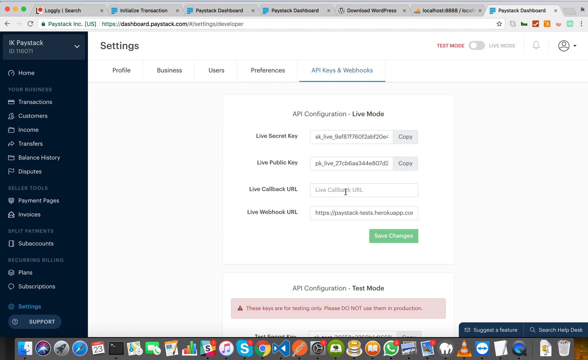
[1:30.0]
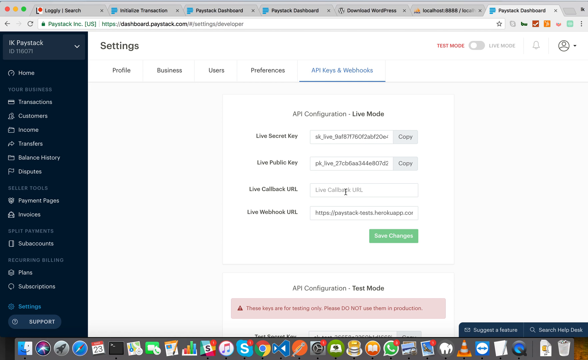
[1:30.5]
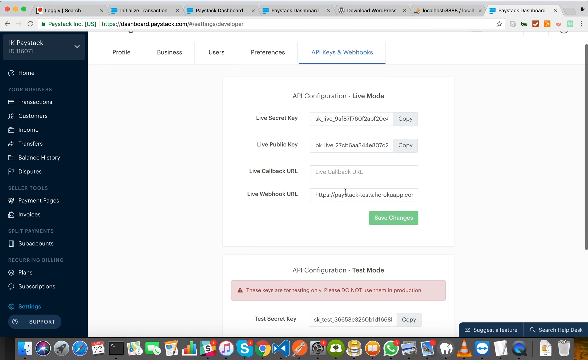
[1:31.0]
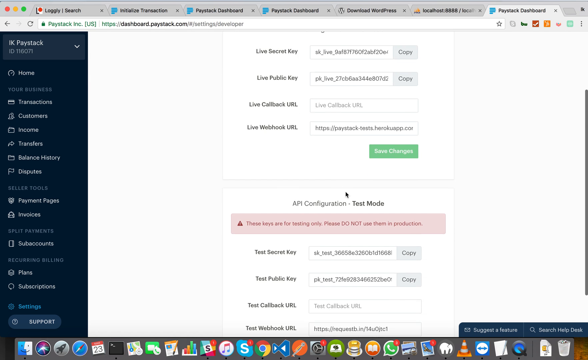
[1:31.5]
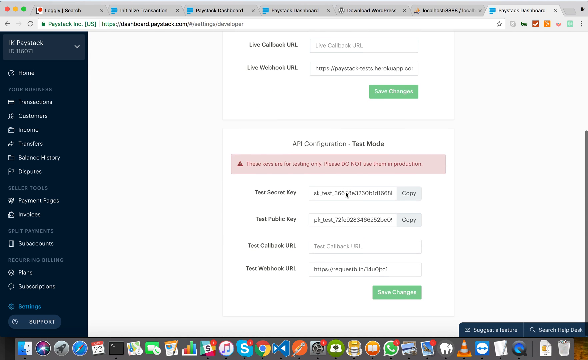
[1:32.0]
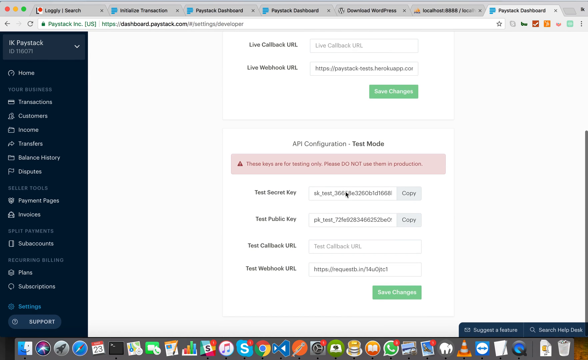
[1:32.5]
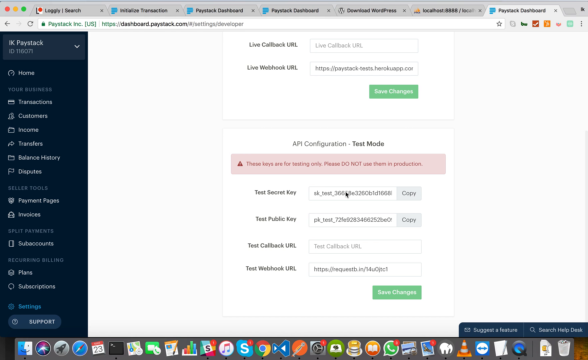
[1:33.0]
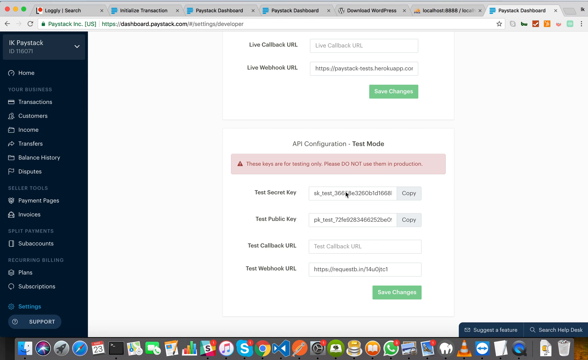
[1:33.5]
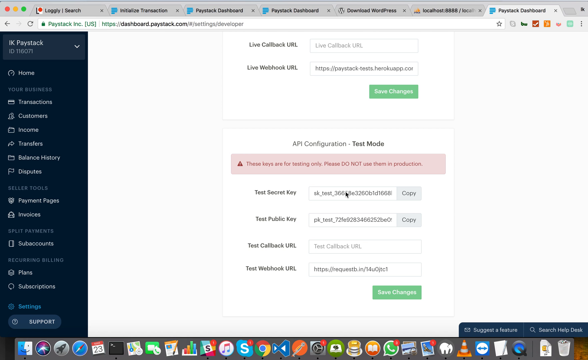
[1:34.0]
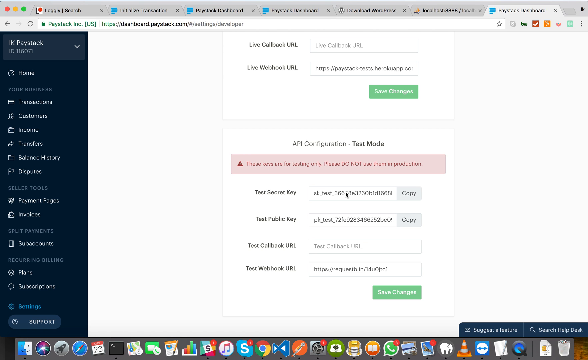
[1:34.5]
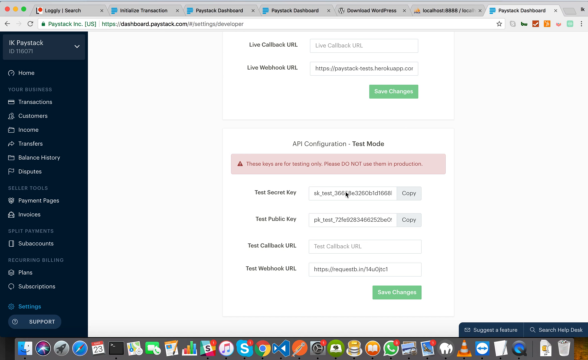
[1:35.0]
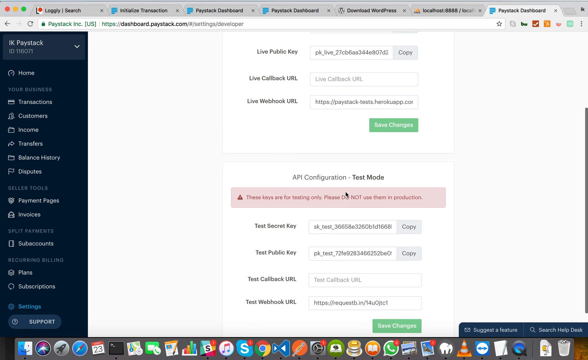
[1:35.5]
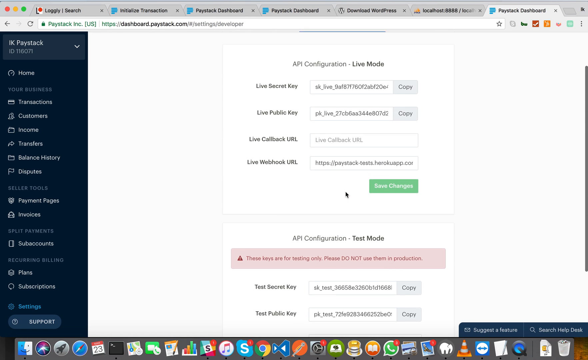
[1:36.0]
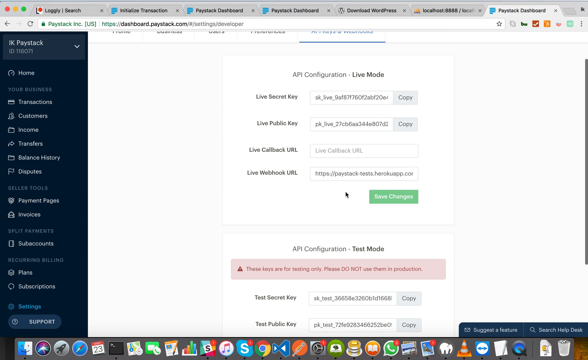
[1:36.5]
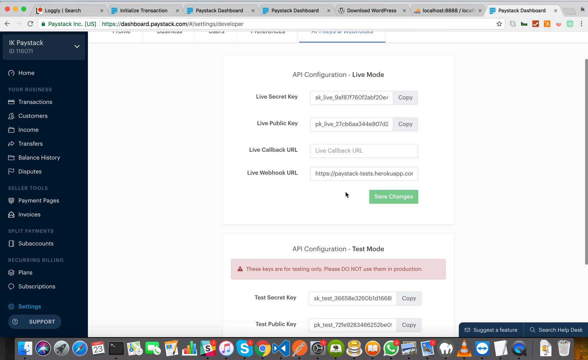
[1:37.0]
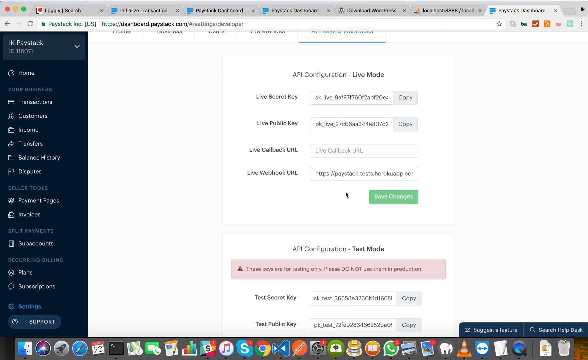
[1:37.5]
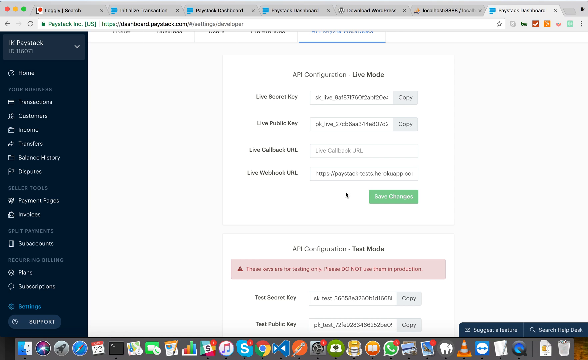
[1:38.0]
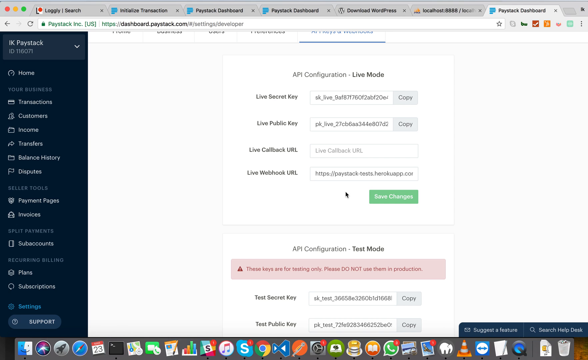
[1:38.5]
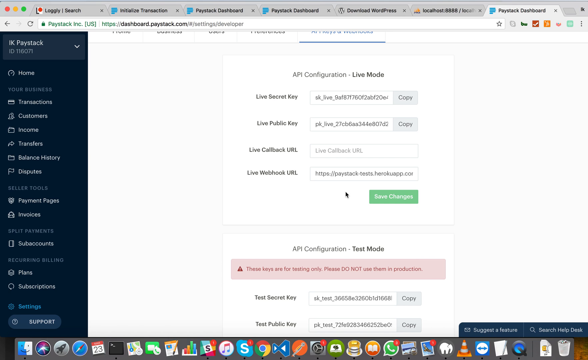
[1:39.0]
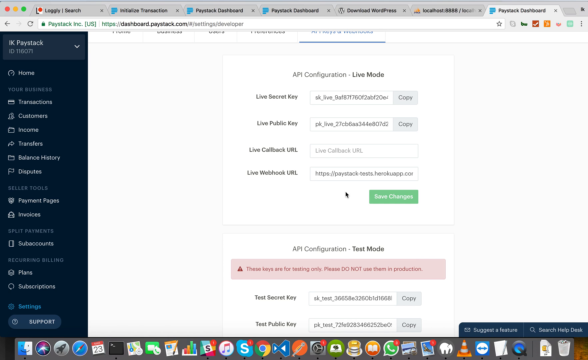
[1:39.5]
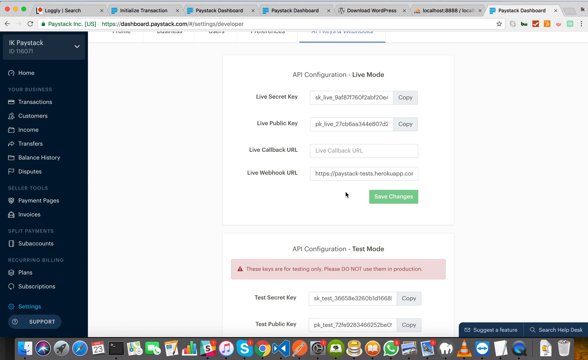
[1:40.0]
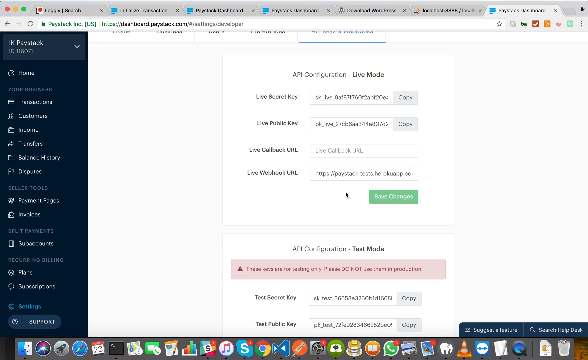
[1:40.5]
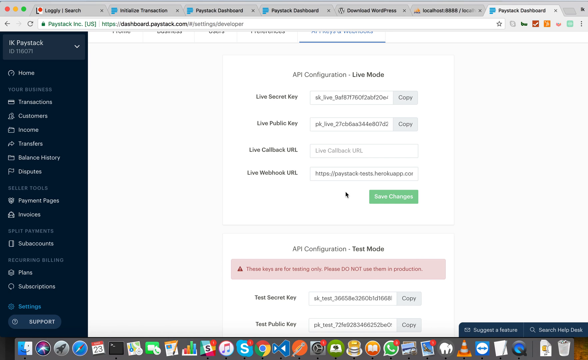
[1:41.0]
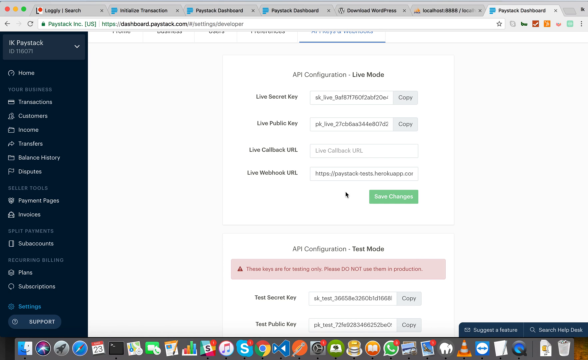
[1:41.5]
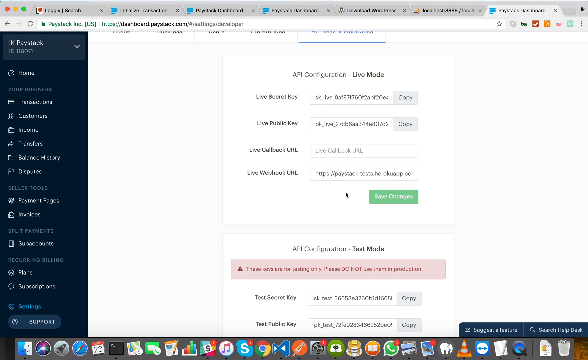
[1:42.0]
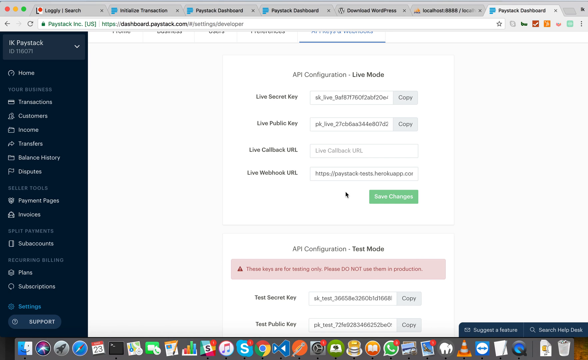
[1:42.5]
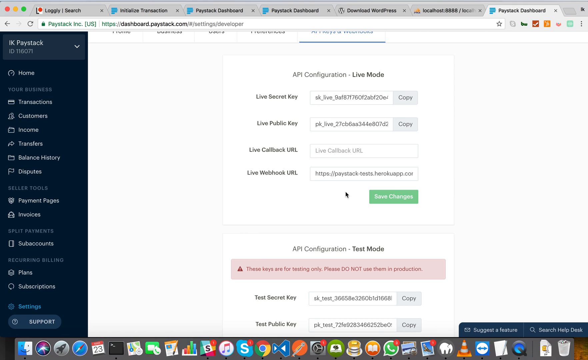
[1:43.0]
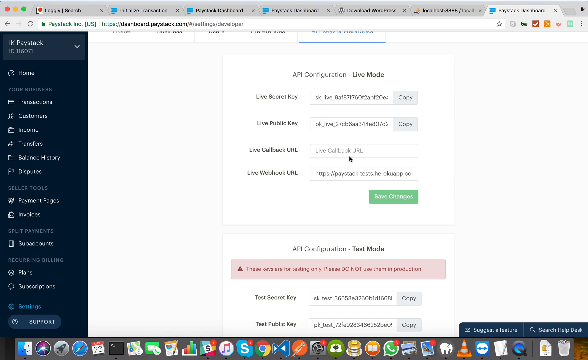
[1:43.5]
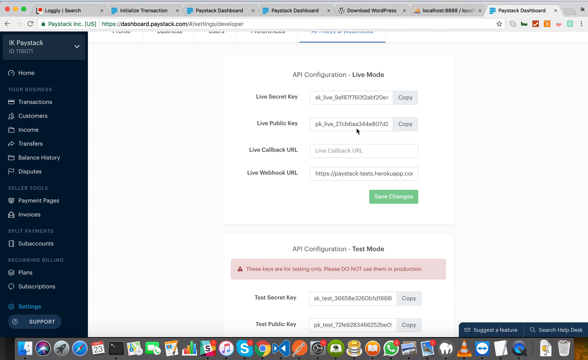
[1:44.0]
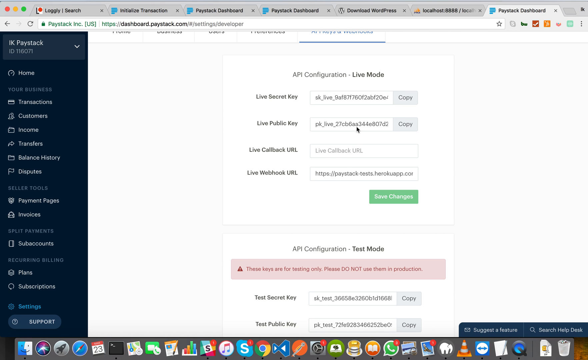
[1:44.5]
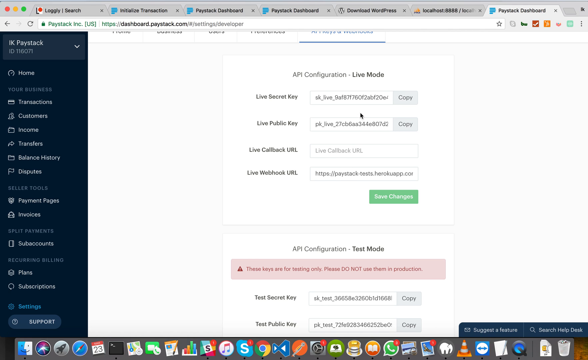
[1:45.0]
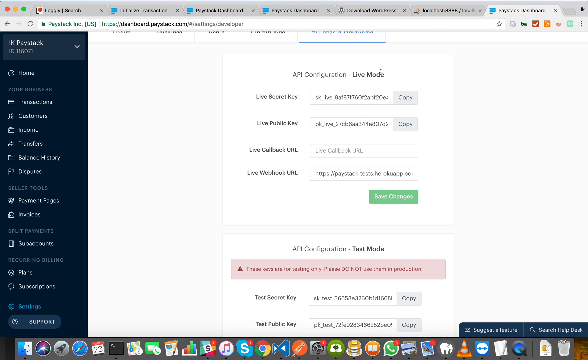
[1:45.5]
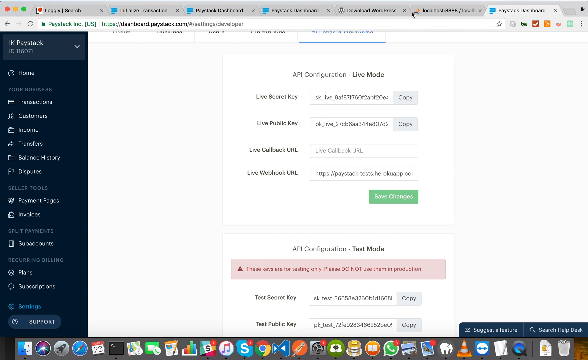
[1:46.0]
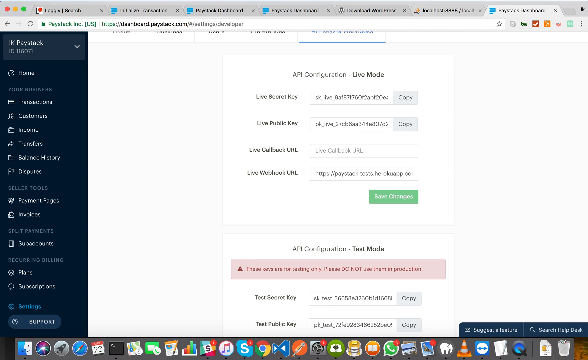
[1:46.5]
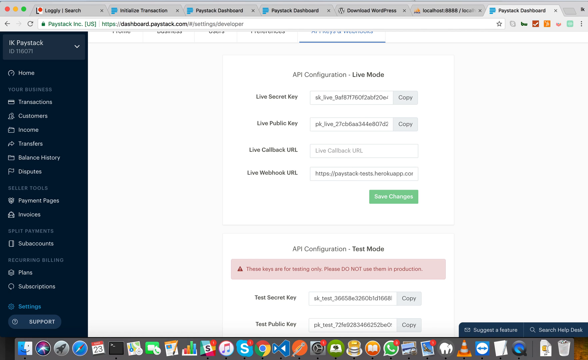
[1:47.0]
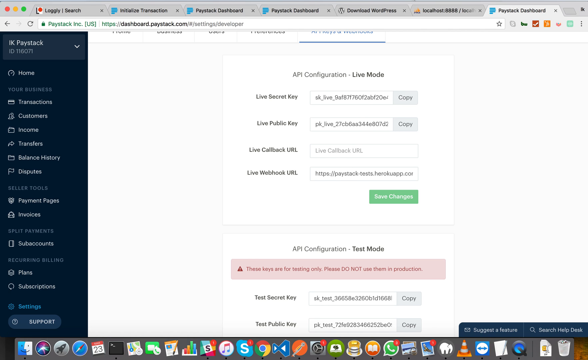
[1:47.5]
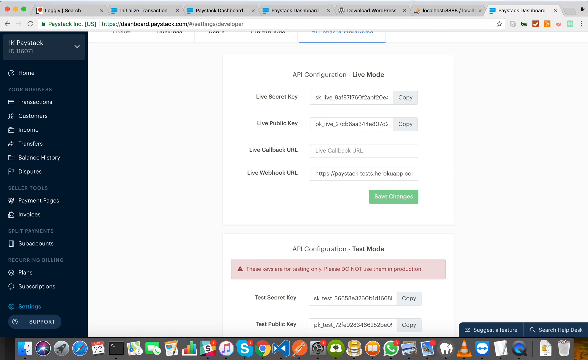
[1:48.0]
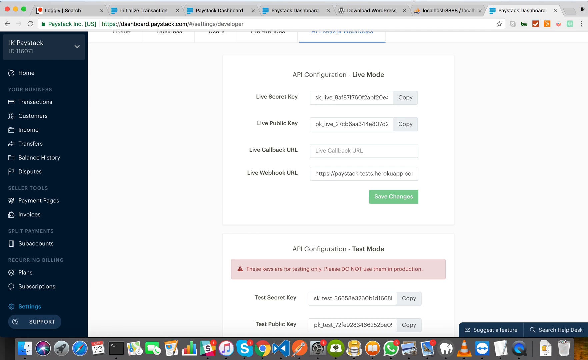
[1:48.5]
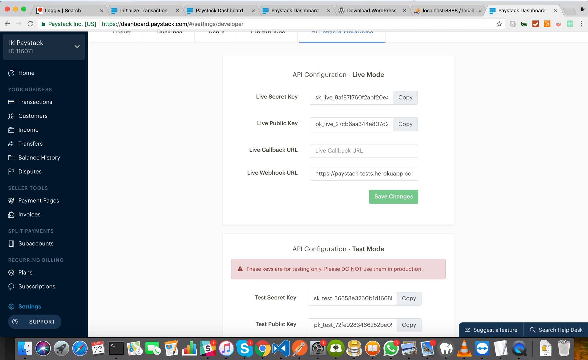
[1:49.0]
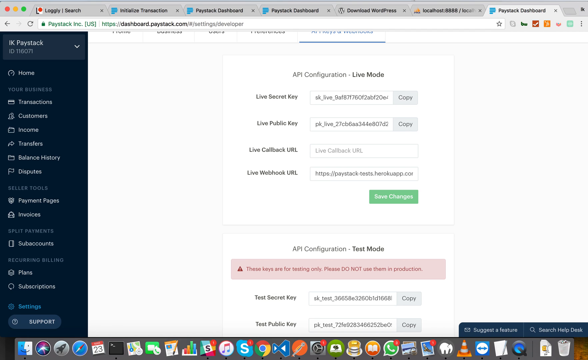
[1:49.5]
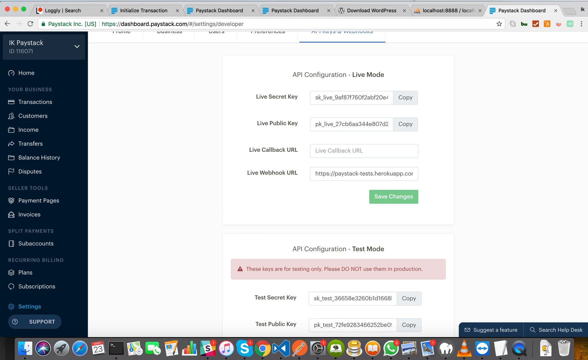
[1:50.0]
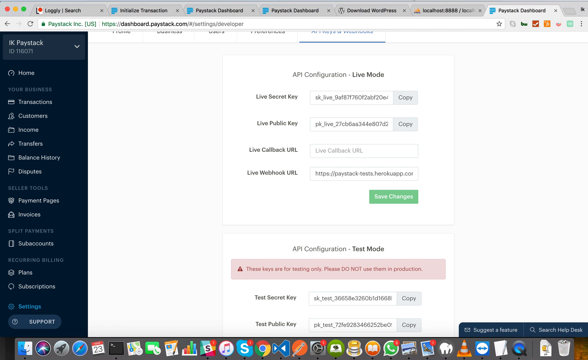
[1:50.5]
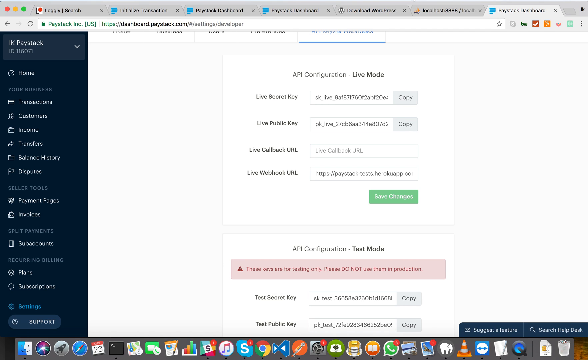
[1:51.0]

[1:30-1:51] The settings page of the IK Paystack dashboard is open on the API configuration. The settings page has a profile tab, a business tab, a users tab, a preference tab, and an API keys and webhooks tab. Under the API configurations are the live secret key, live public key, live callback URL, and live webhook URL, with a big red message at the bottom that says "these keys are for testing purposes". The mouse scrolls down the page, quickly goes to the API test mode category, and then goes back up to the API configuration settings. The cursor hovers around the area that says secret keys at the top and the area at the bottom that says secret keys; the keys are different.